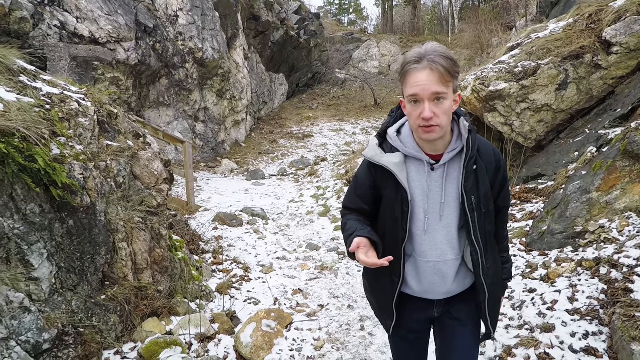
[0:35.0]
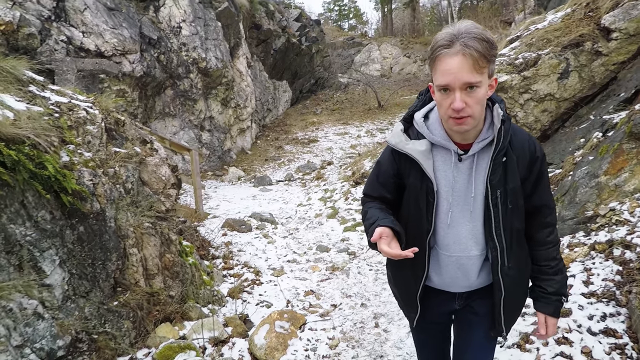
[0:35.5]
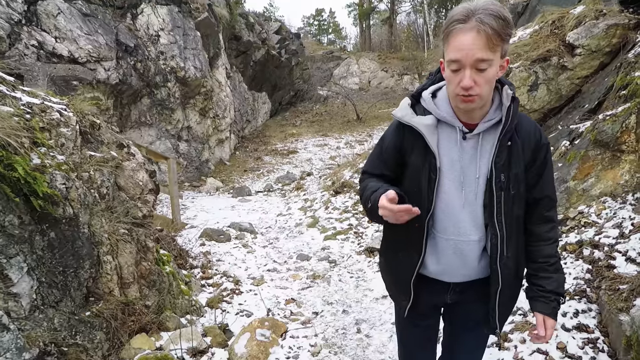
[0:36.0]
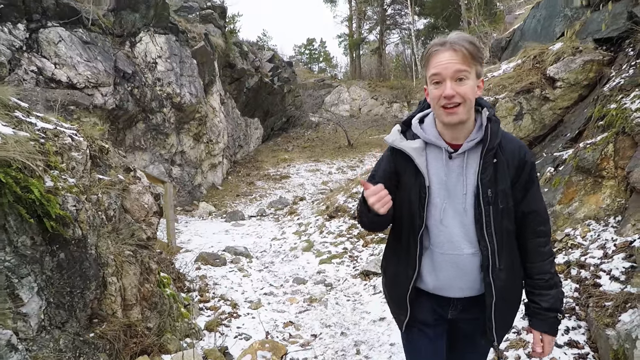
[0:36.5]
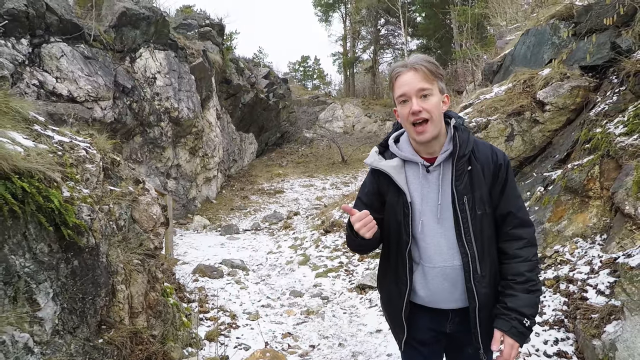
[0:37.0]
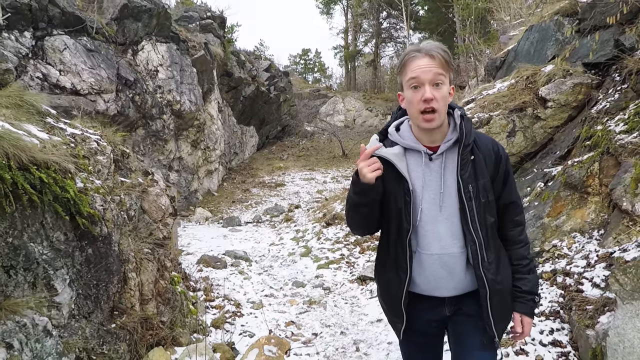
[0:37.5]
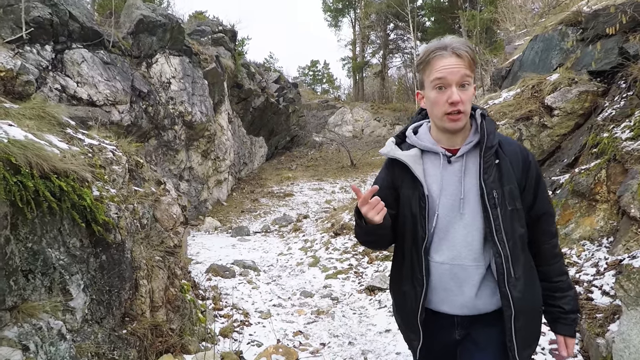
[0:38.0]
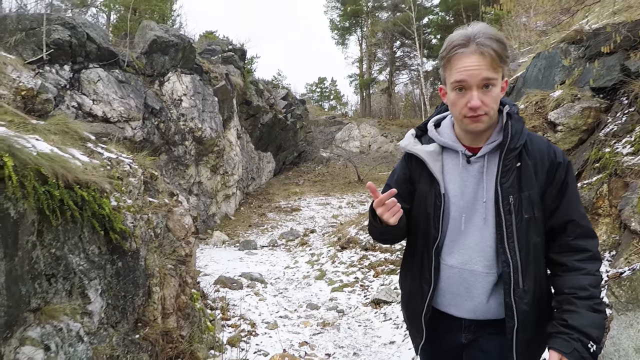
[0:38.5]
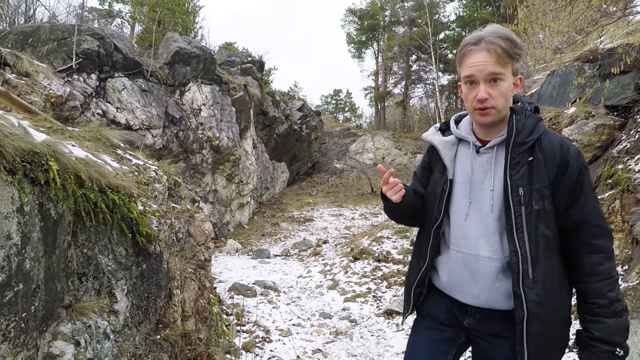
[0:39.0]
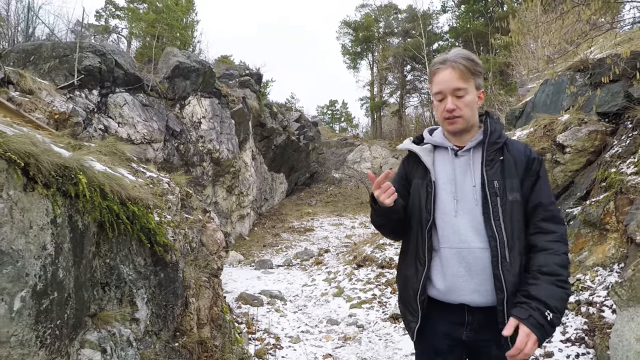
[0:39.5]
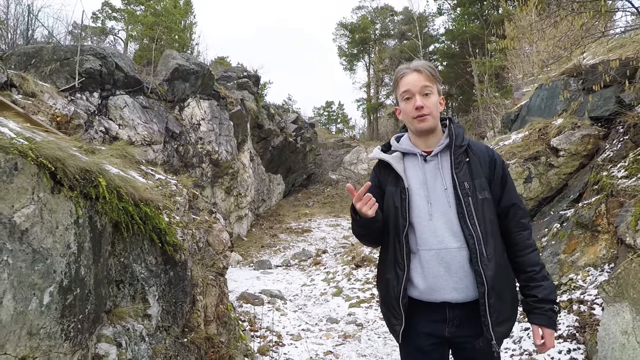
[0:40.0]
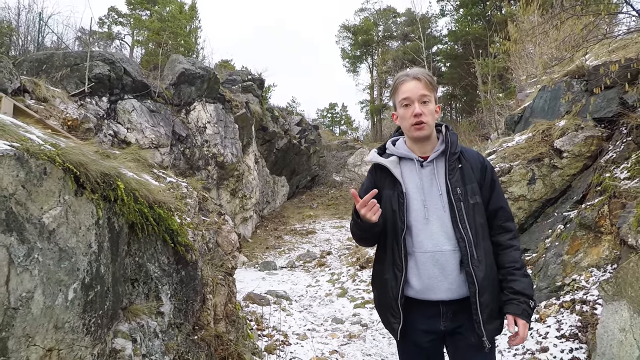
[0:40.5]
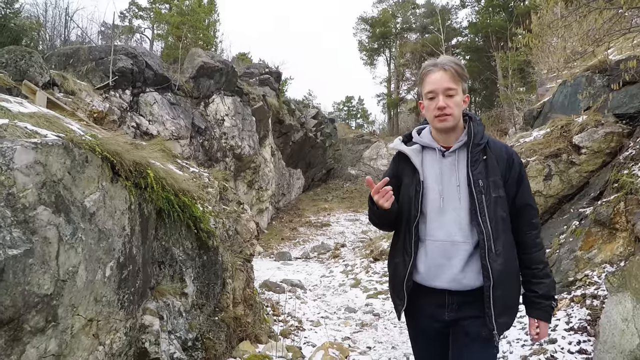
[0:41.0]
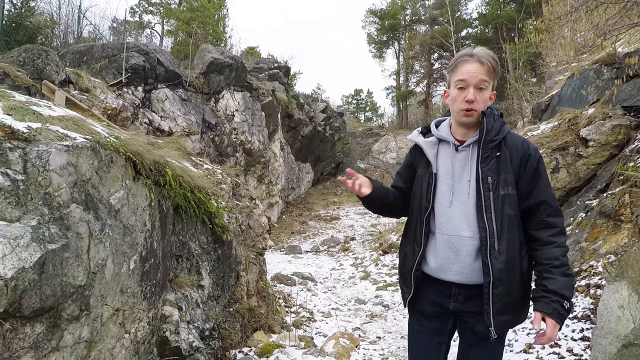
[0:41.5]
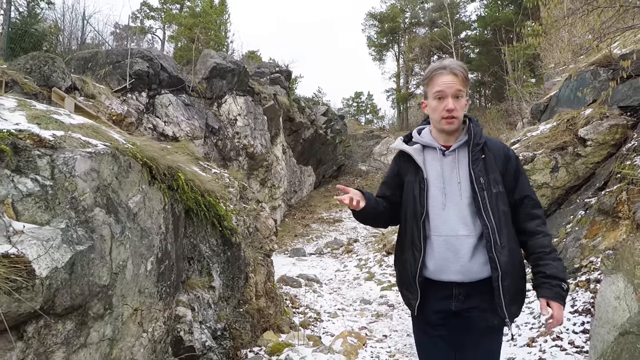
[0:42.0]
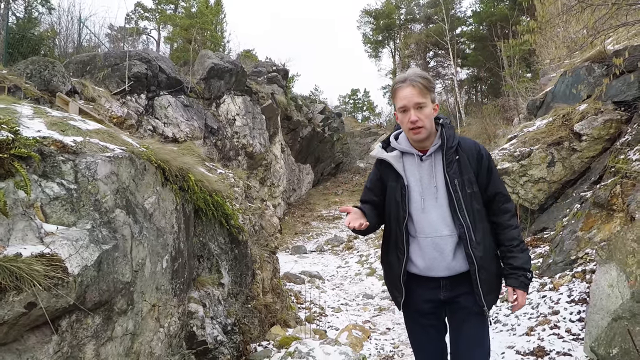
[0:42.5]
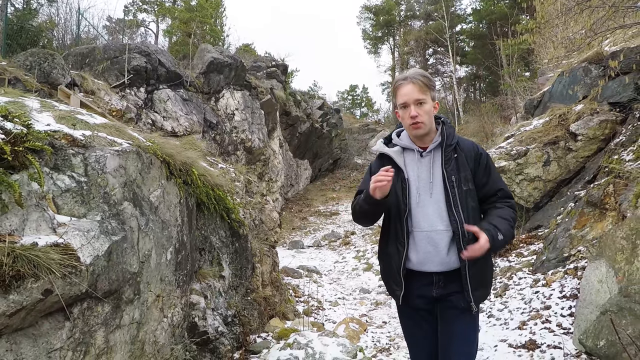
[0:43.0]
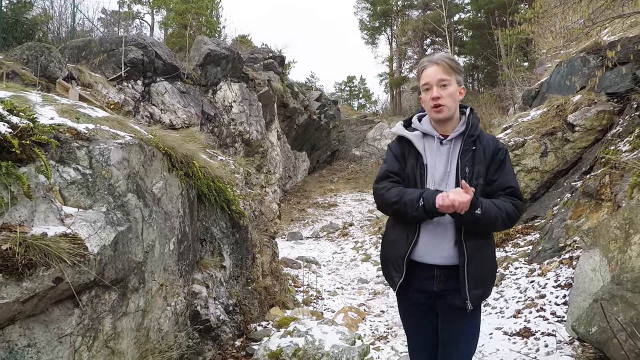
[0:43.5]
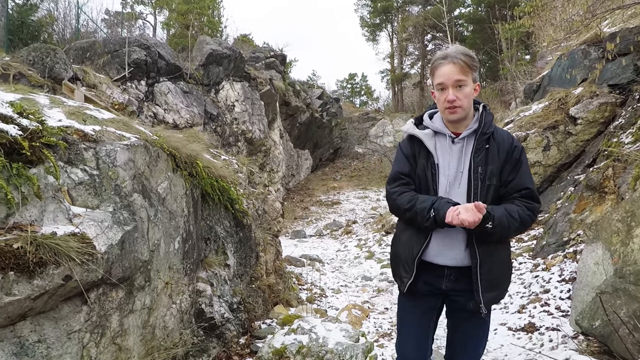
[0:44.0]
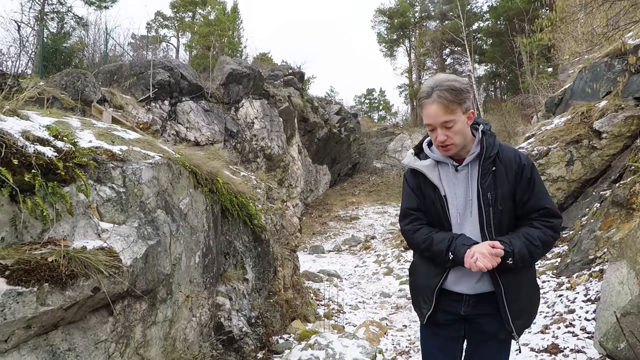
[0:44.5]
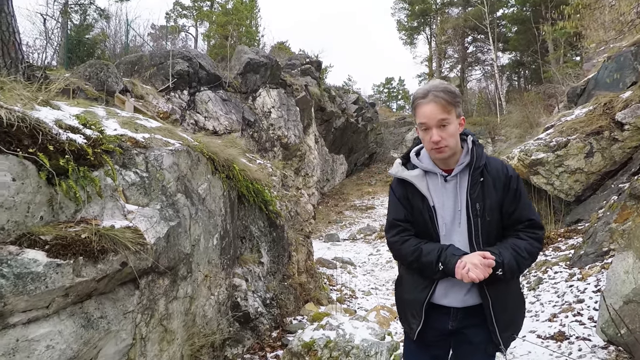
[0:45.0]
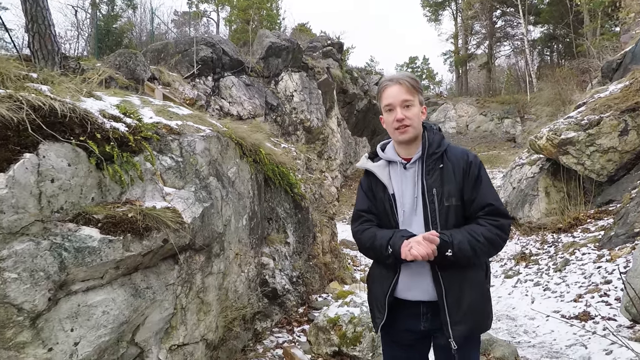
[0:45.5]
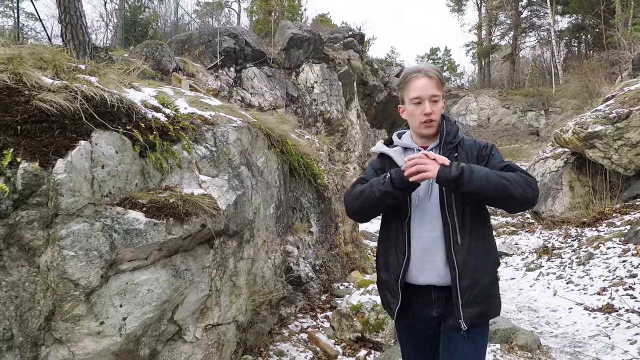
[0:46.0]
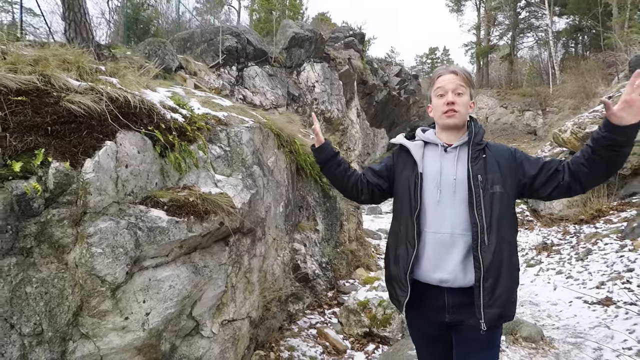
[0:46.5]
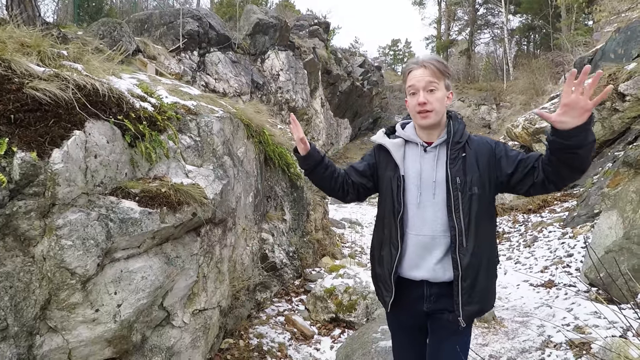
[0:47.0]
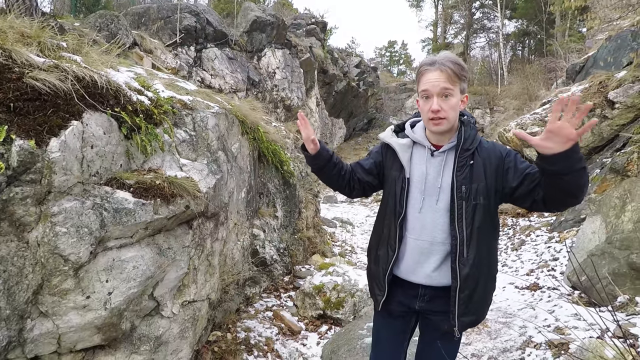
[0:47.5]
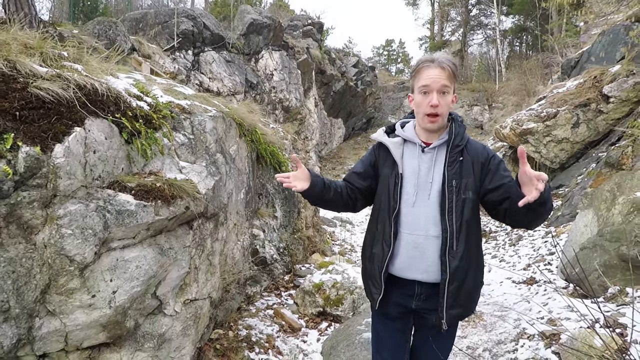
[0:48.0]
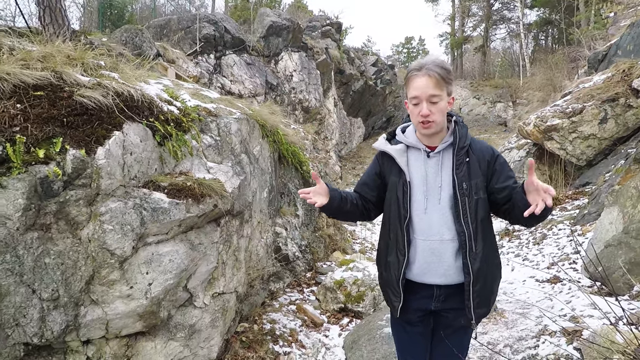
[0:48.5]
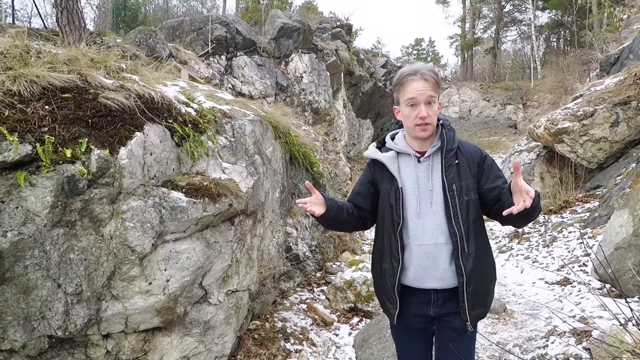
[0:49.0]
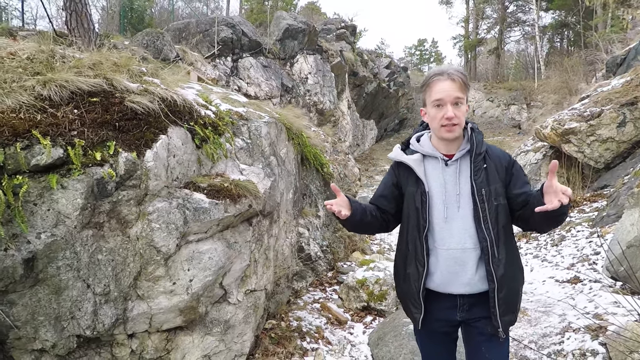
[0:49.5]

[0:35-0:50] The video is One Town, Four Elements, Uterbi, titled Four Things You May Not Know. A white man with a funny haircut points down a road that looks kind of barren, with what looks like a small town at the end. He clasps his hands together. Pictures of someone from 1789 and some kind of treaty are shown; the document looks like it is in French. He appears to be in a small European town. There is snow on the ground and algae on the rocks, with no other people around and no houses visible. He is near a wooded area, talking, gesturing with his arms and counting things on his fingers.